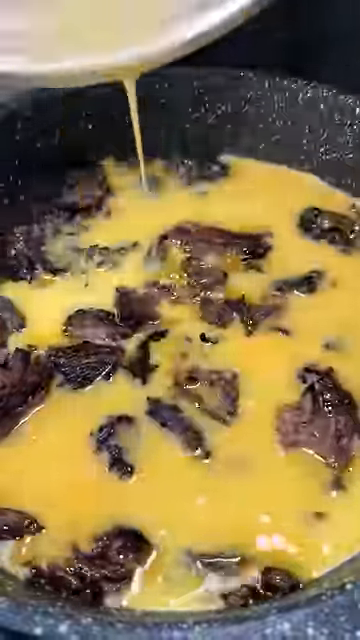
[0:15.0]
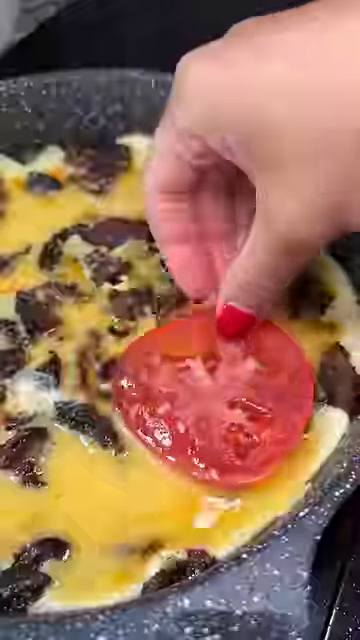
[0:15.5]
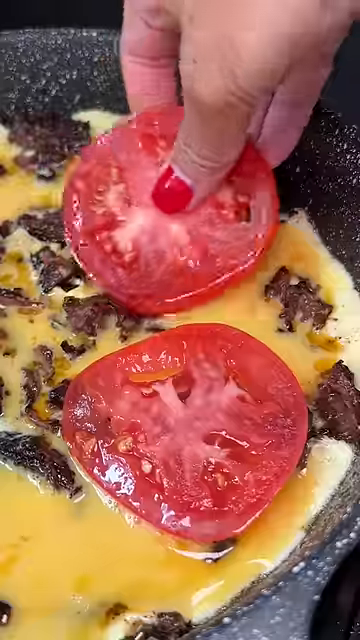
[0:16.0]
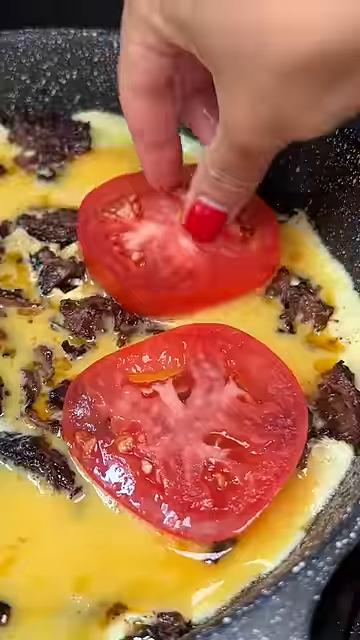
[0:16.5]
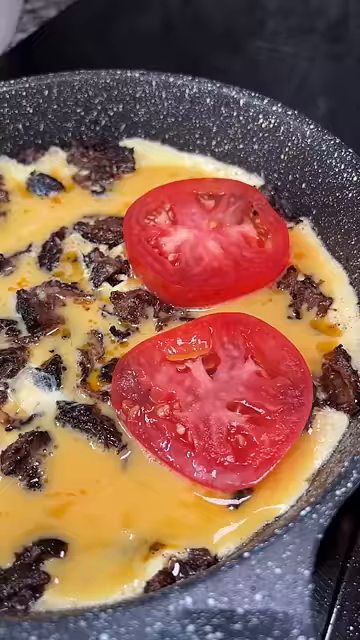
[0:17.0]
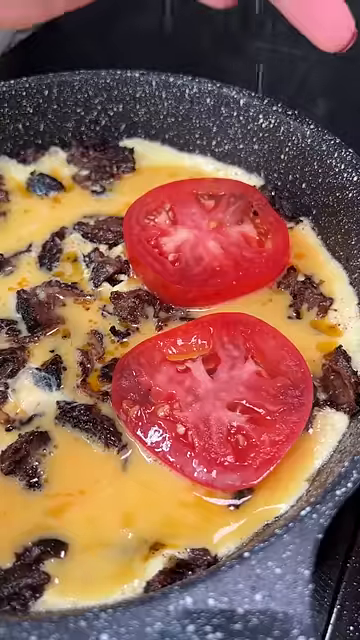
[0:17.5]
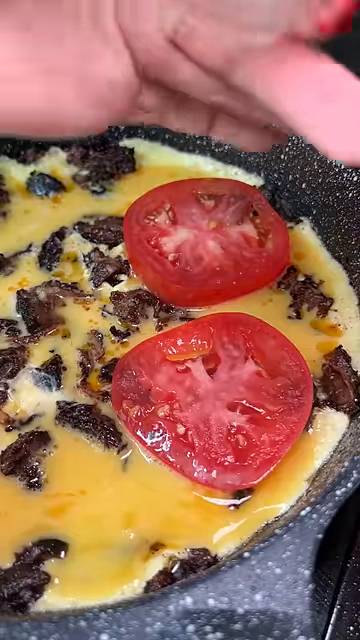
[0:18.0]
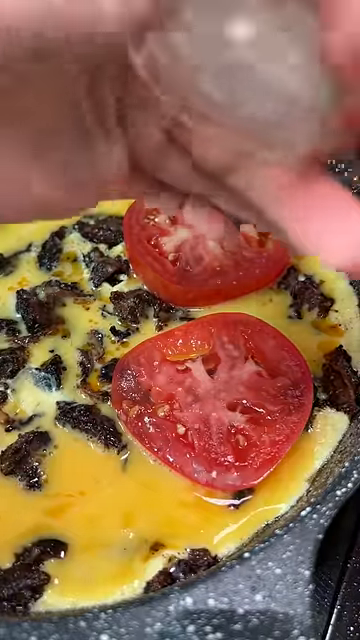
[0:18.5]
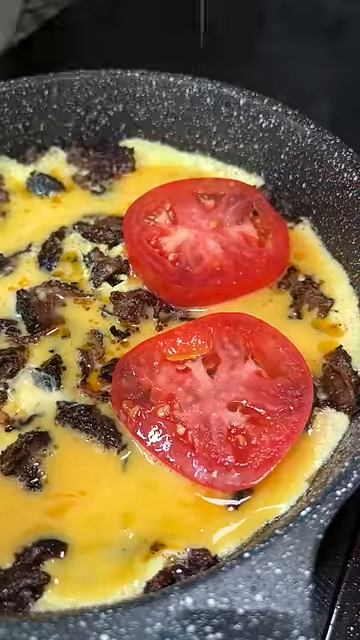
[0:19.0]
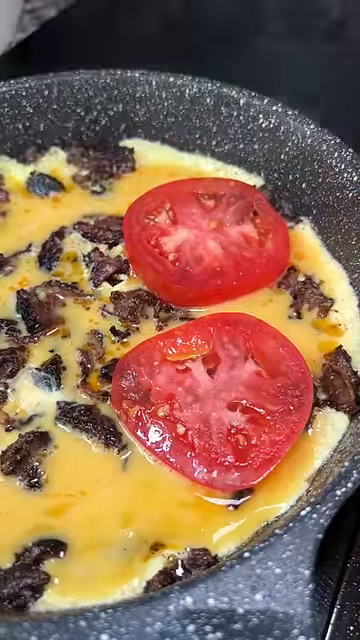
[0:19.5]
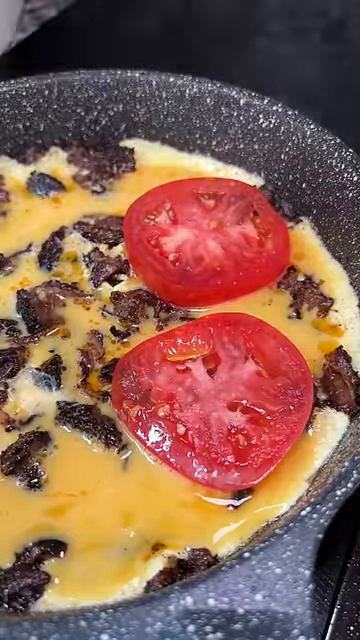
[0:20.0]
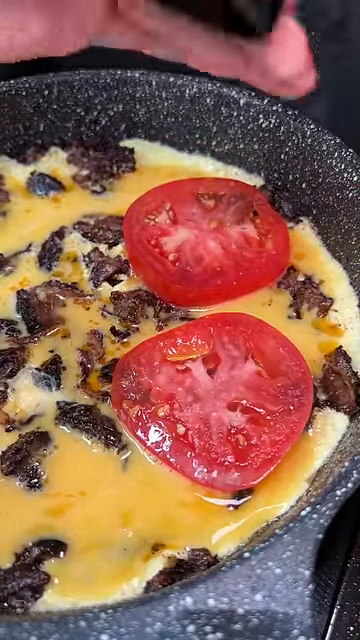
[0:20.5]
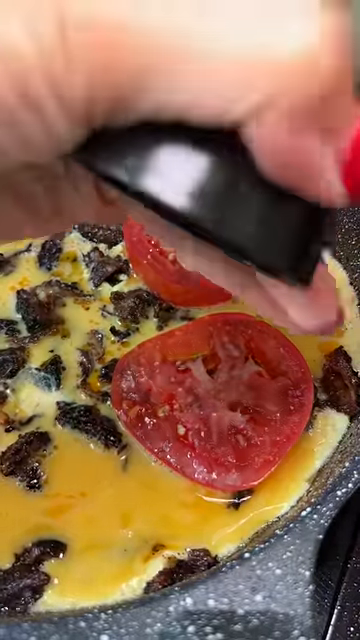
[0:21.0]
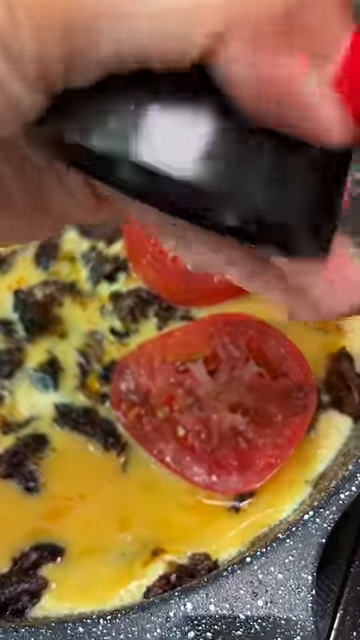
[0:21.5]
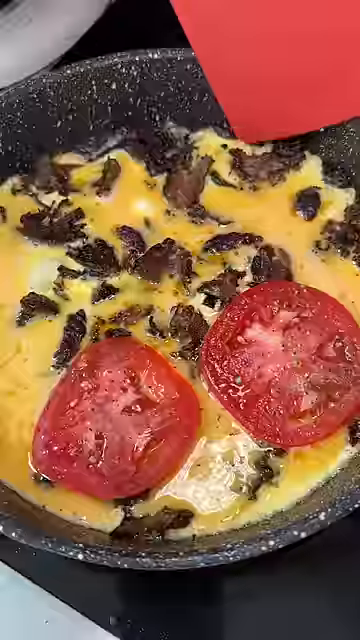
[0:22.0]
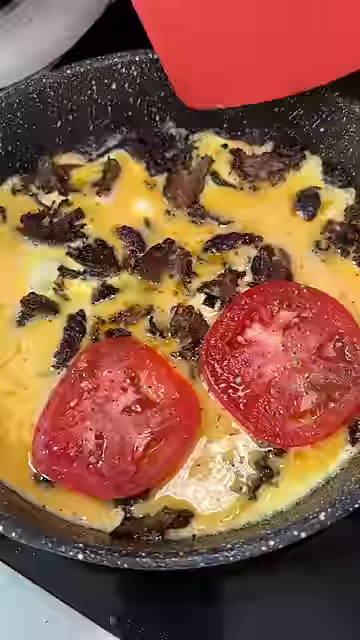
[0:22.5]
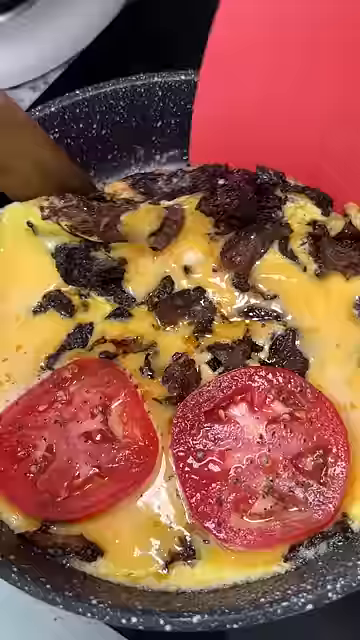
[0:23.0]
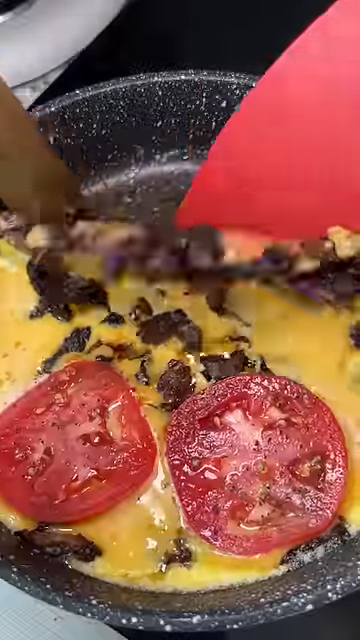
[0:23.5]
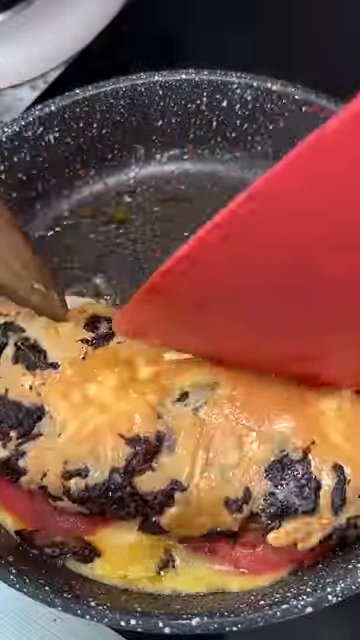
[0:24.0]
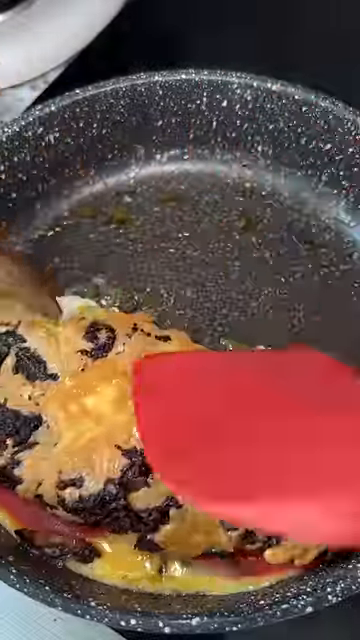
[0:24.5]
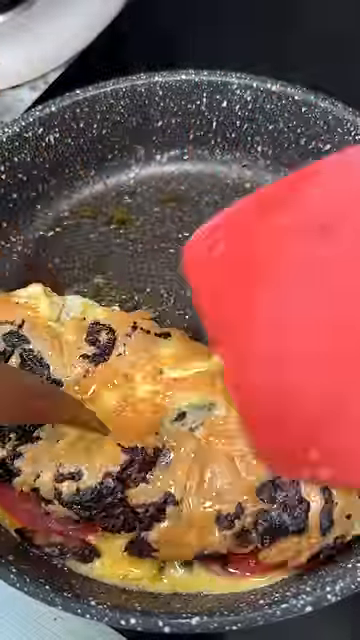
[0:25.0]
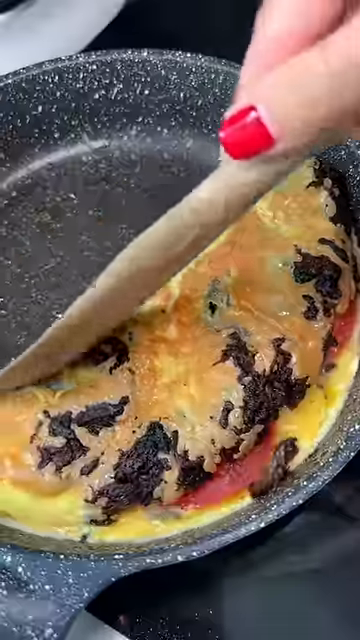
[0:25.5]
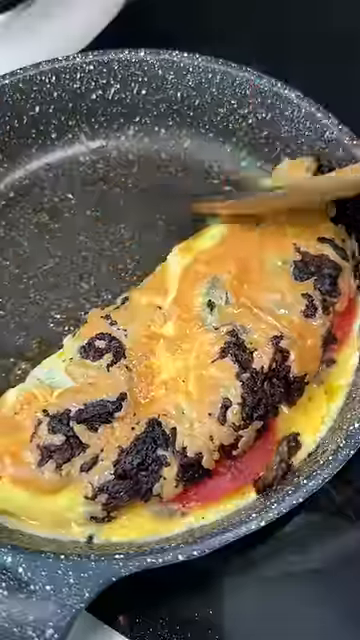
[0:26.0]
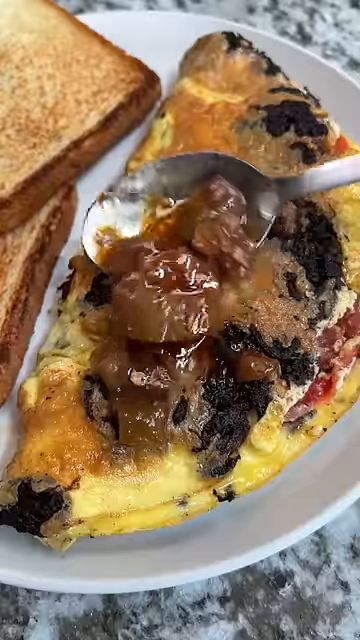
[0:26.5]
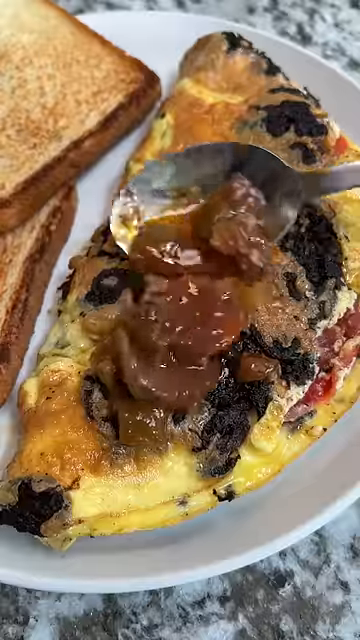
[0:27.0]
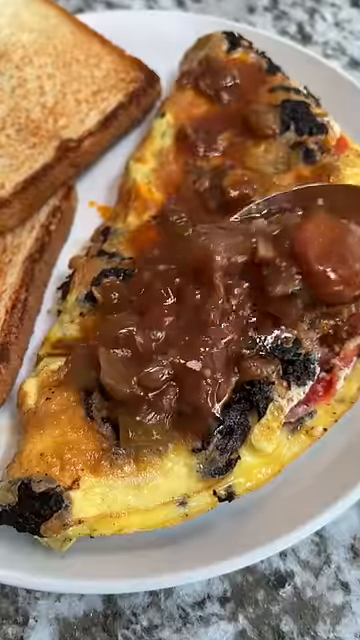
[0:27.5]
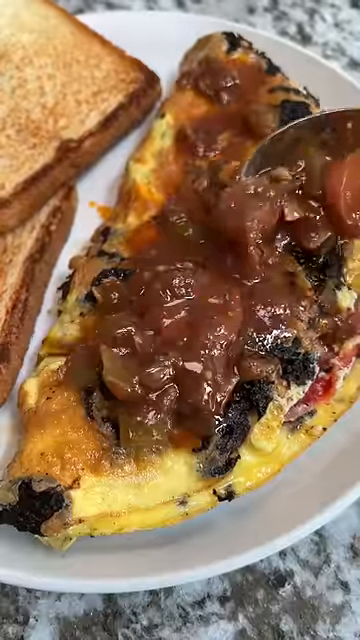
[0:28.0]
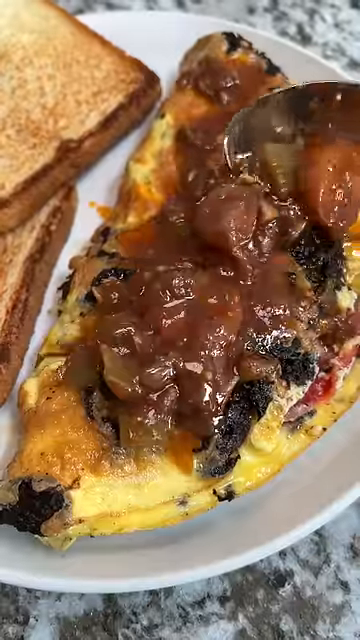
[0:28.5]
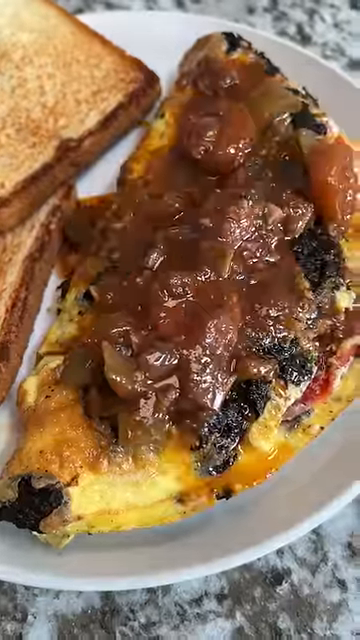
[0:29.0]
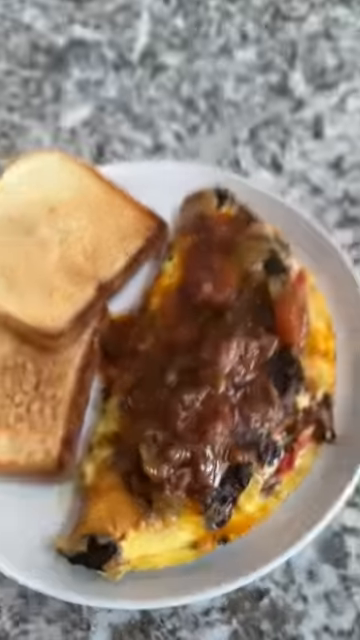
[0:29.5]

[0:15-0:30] Tomatoes and some salt appear to be added to the top of the omelette. Once the omelette is completely solid underneath, it is flipped over. A gray substance, which looks like the juice from the roast that held the carrots and other items, is then put on top of the omelette. The omelette is served with two pieces of toast.